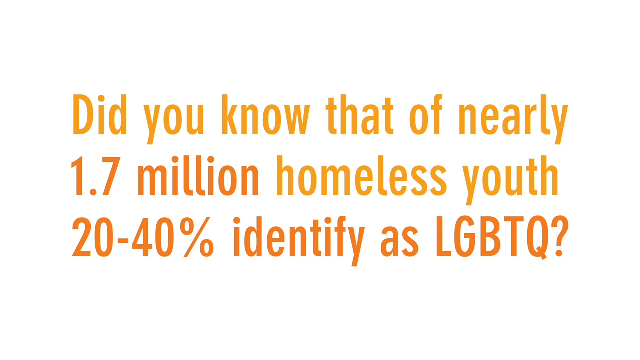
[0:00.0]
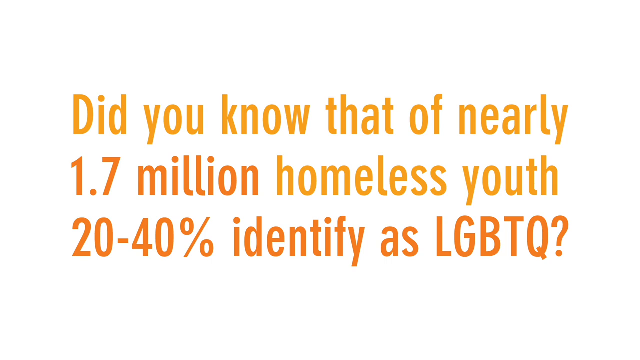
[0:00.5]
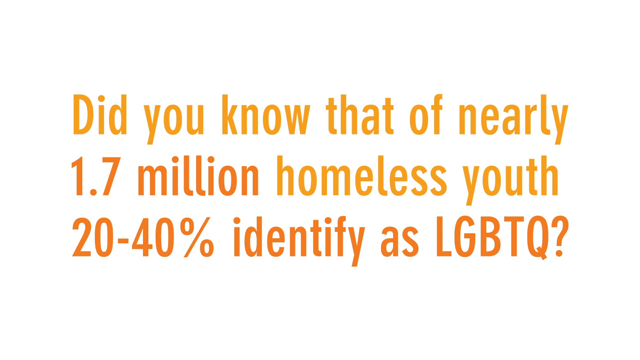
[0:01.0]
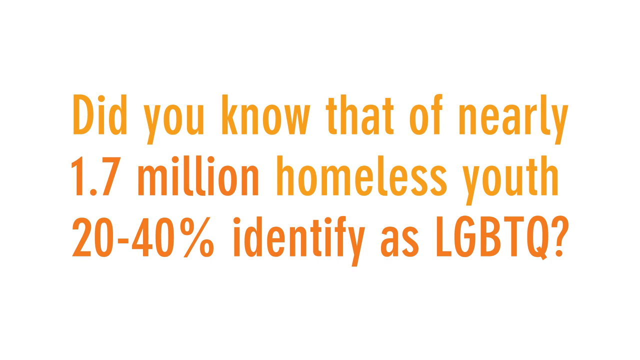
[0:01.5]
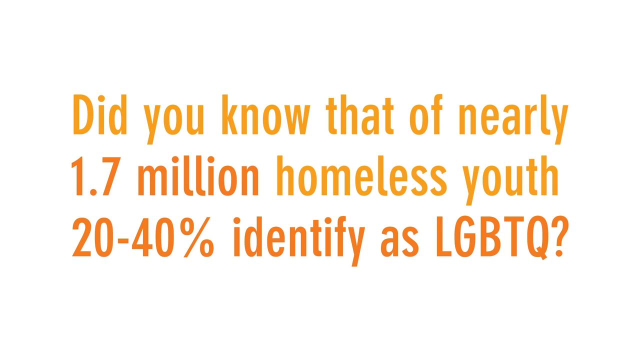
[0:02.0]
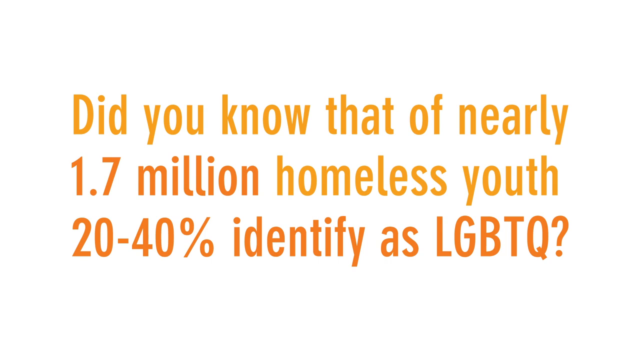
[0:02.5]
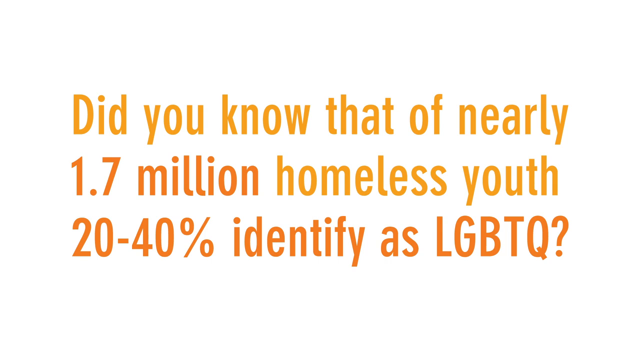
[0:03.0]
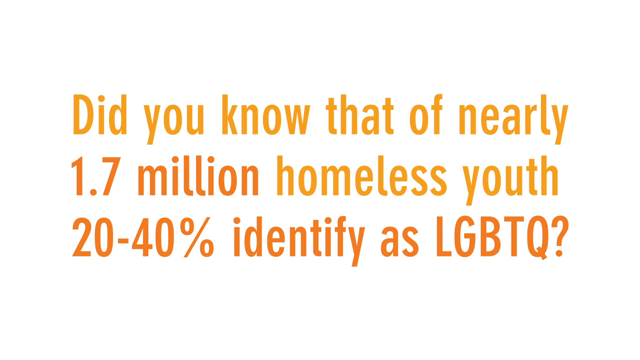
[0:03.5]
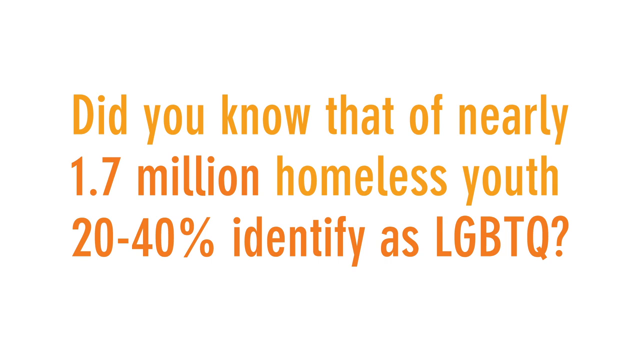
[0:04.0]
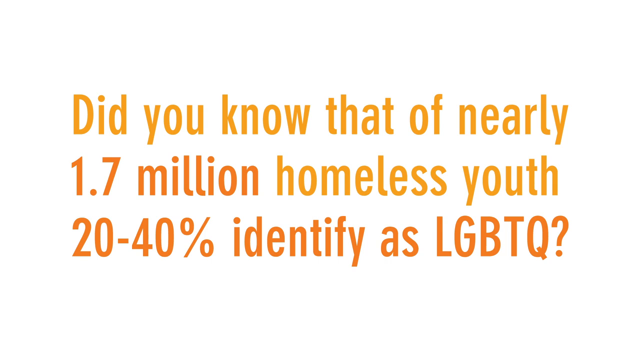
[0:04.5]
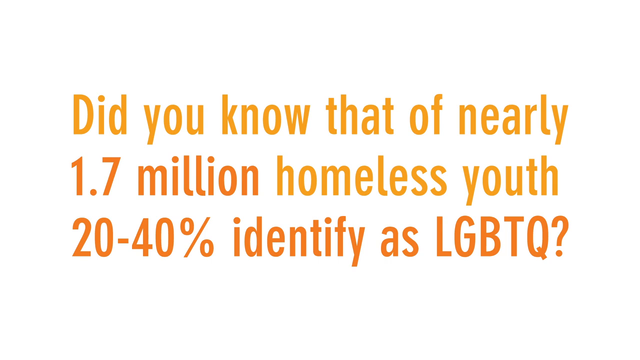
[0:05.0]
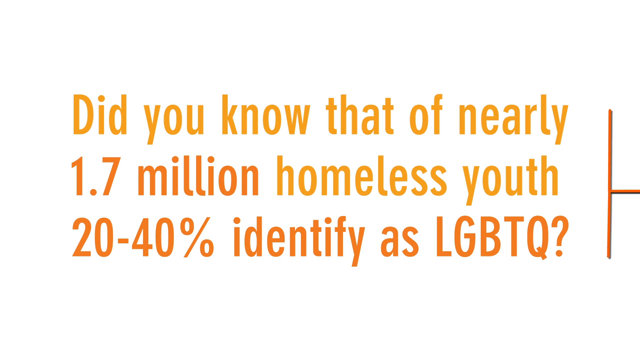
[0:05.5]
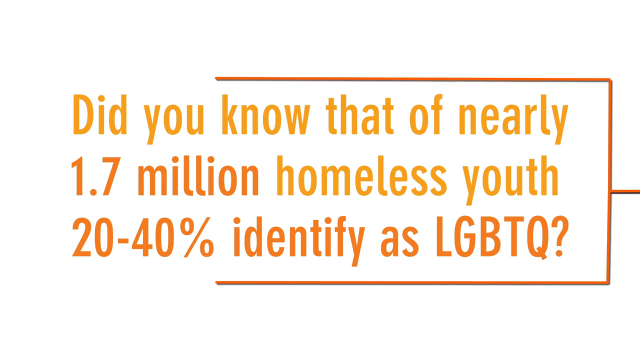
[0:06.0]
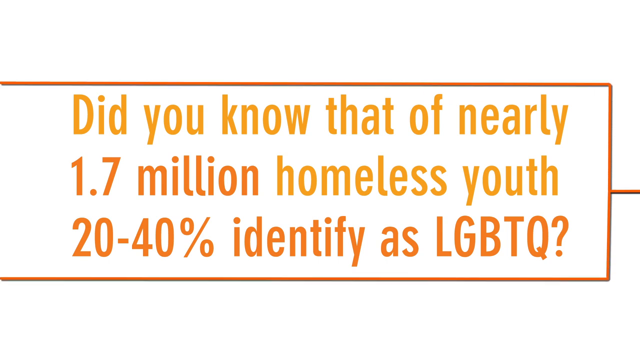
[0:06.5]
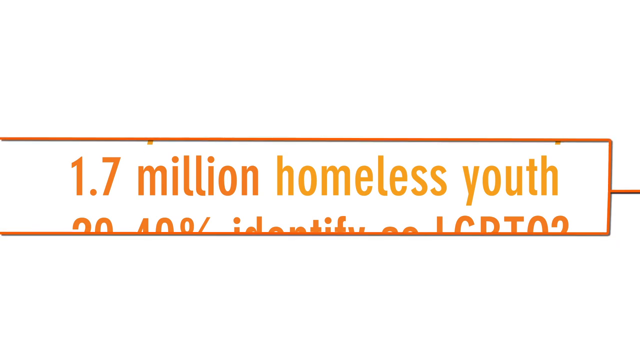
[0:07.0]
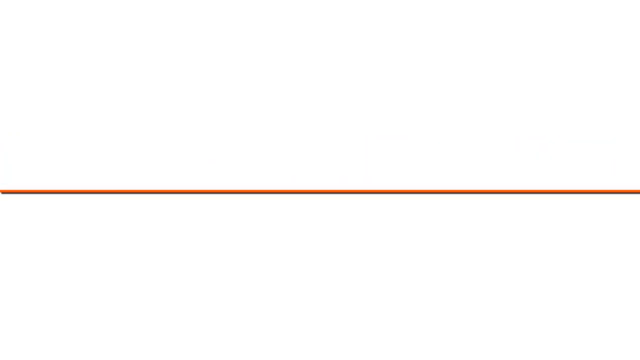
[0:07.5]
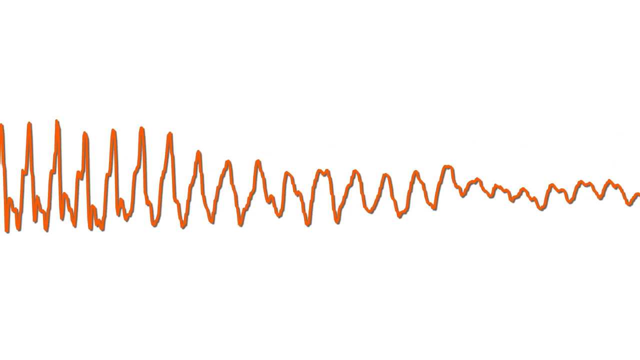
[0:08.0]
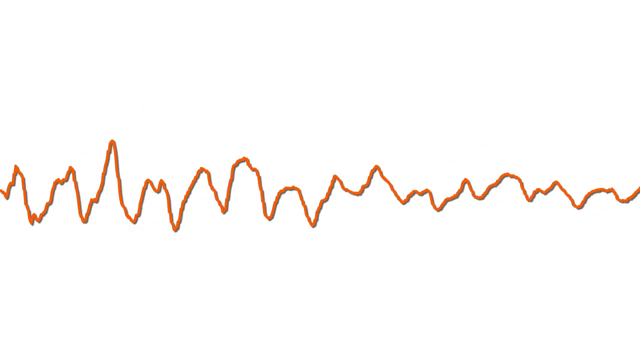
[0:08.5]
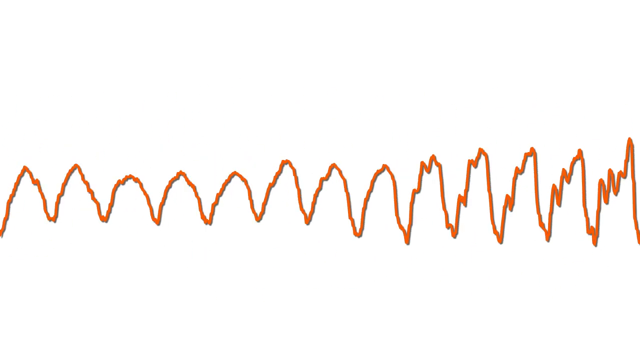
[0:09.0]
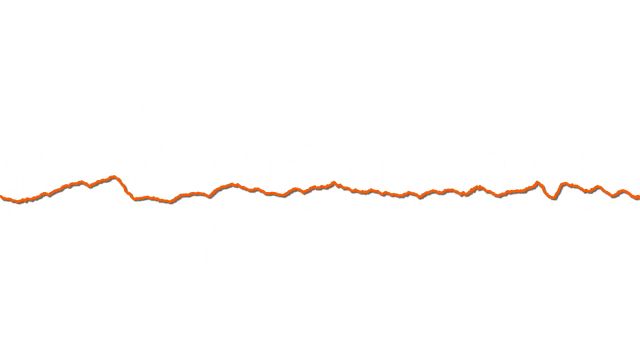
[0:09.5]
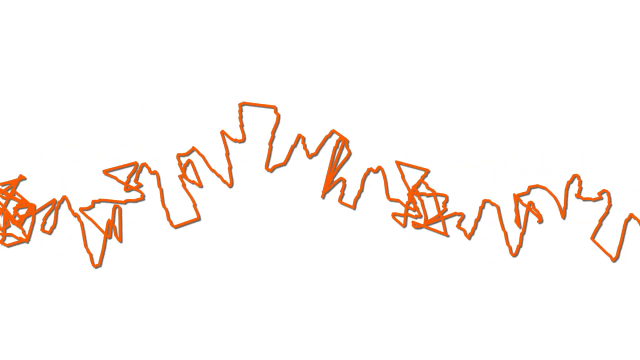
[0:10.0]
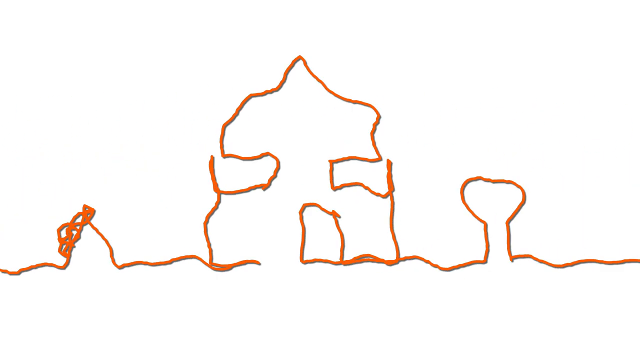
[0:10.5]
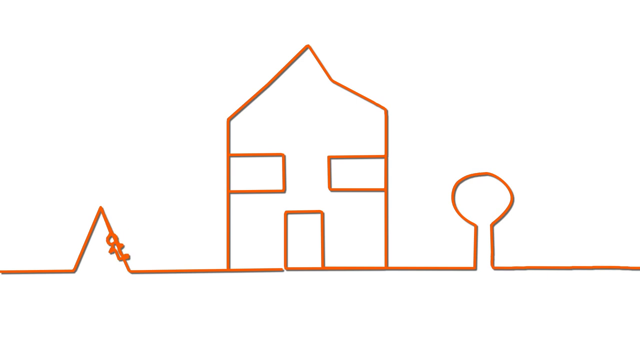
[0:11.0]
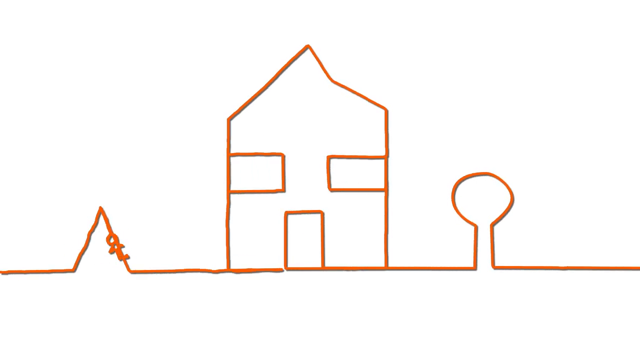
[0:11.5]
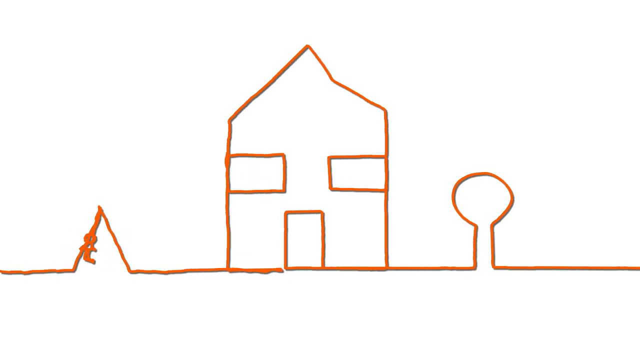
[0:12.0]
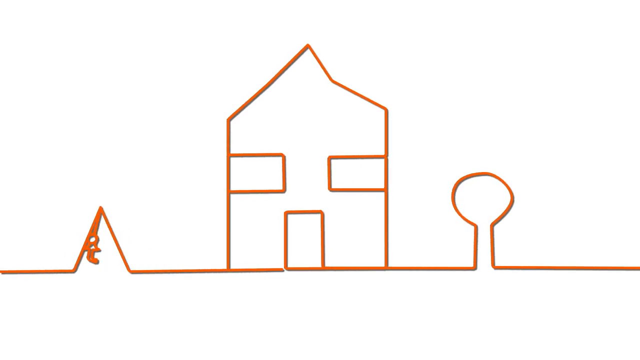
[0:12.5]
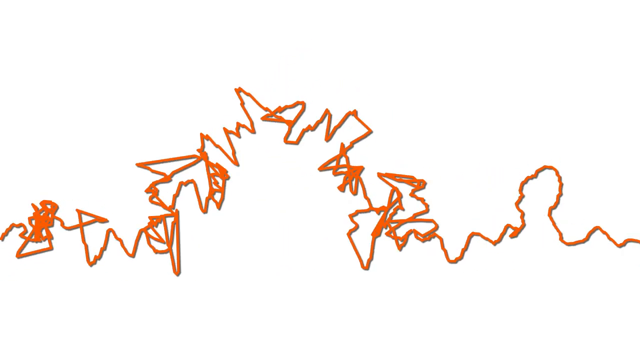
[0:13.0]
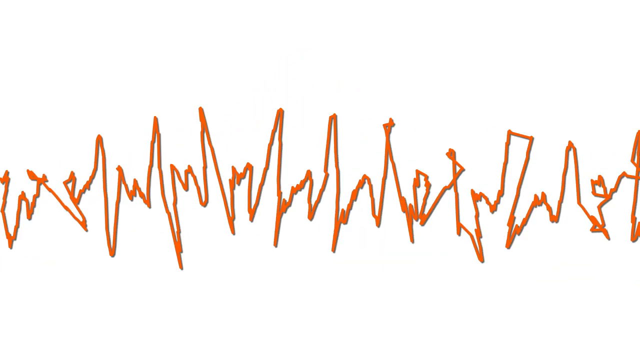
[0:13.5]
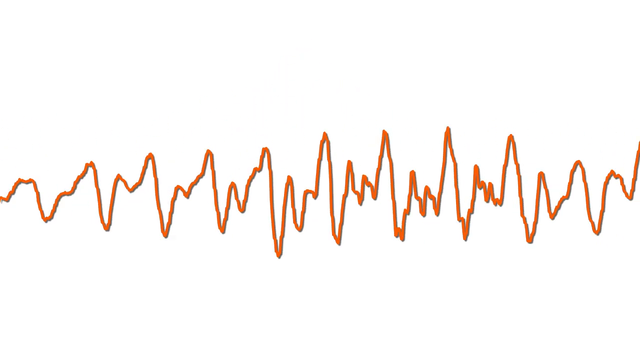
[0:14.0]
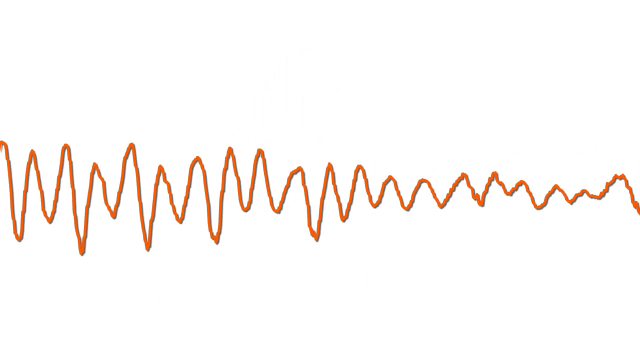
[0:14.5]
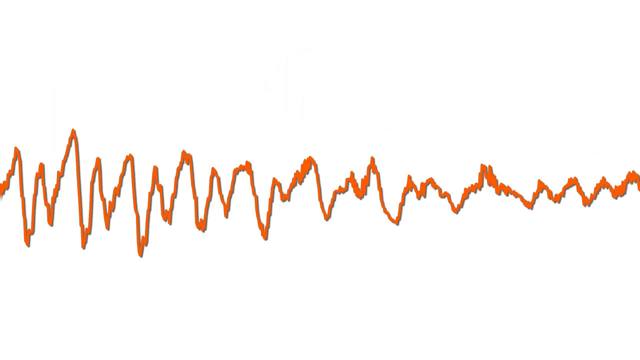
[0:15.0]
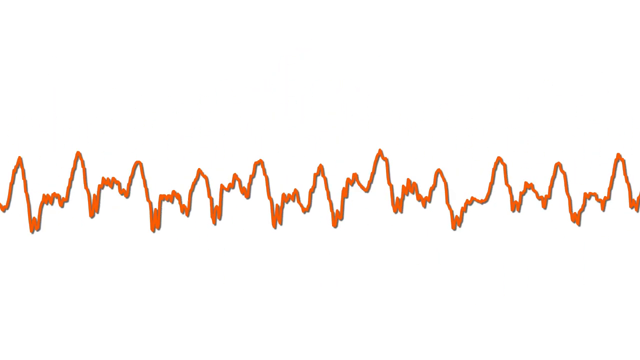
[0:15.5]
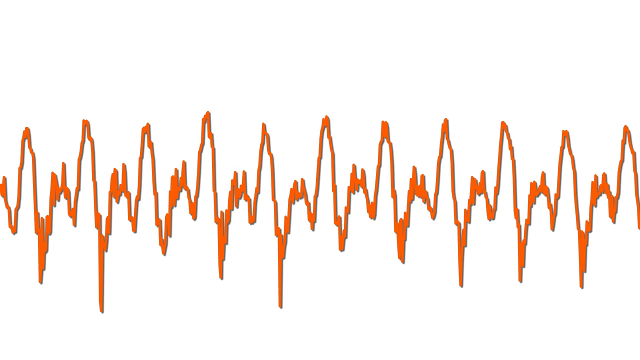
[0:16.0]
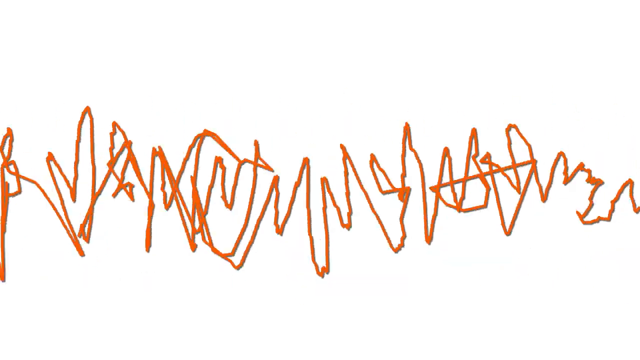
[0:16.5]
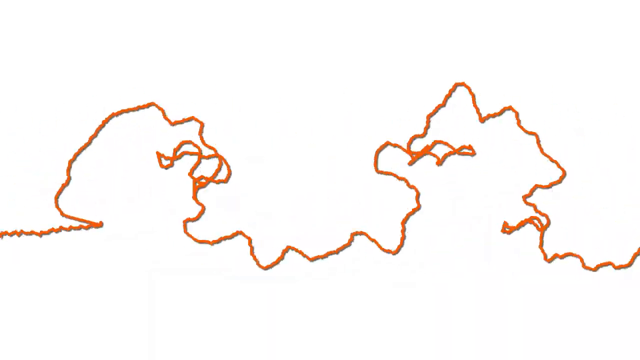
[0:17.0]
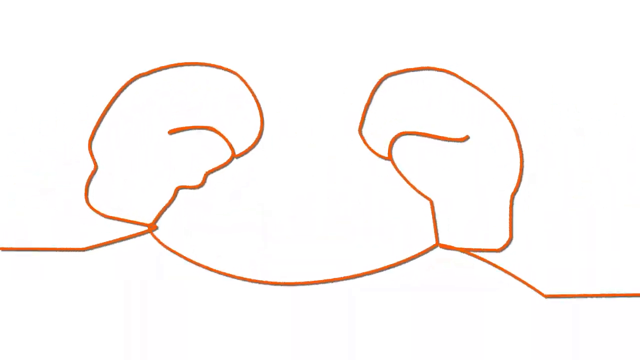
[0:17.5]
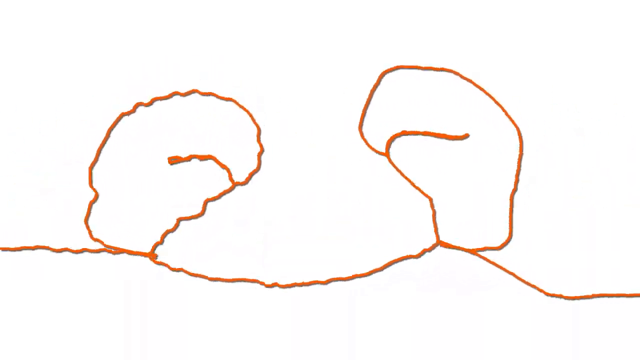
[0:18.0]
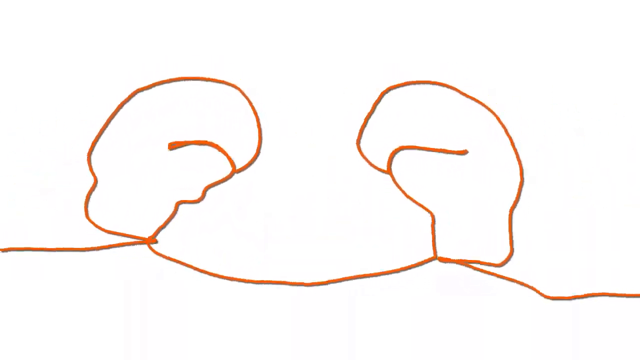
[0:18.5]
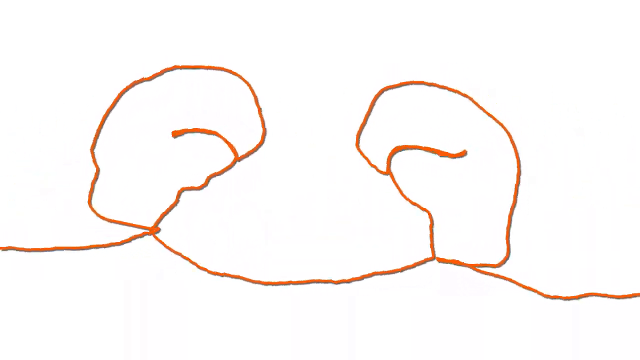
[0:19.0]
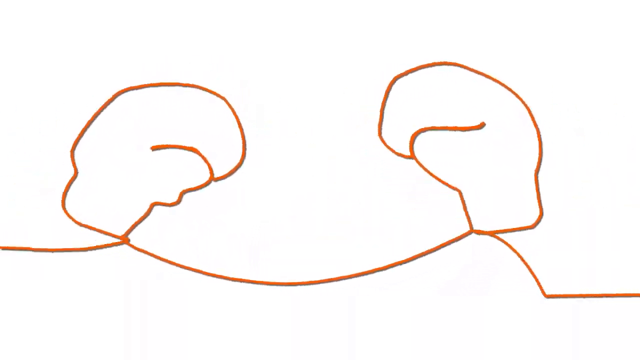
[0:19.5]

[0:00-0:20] Text appears on a white background. The first line is orange, the second line has some dark orange in the numbers and statistics, and from the third line on all the text is in orange or dark orange. The text reads "did you know that of nearly 1.7 million homeless youth, 20-40% identify as LGBTQ?" A horizontal line comes in from the right, and as it reaches toward the text it breaks apart, going straight up and down, and wraps around the text to form a rectangle. It does not go down on the left end; it sort of just hits the edge of the screen to finish the rectangle. The rectangle then squishes down, removing all the text, and turns into a wavy line like an audio sound wave, going from sort of static to very sharp, quick oscillating waves. It then fizzles up into a very simple drawing of a home: a door in the center, two windows at the middle right and middle left, a tree on the right that is more like a circle on a stump, and a triangle on the left that is a swing, where a little stick-figure kid swings from left to right facing the home. The line squiggles again and turns into two boxing gloves facing each other.